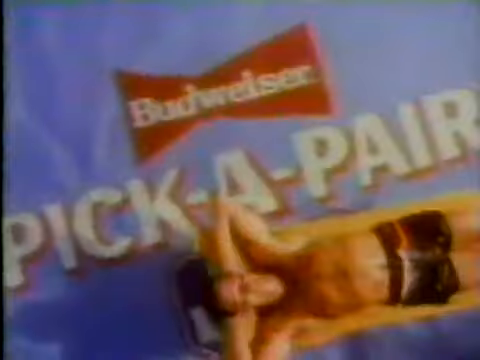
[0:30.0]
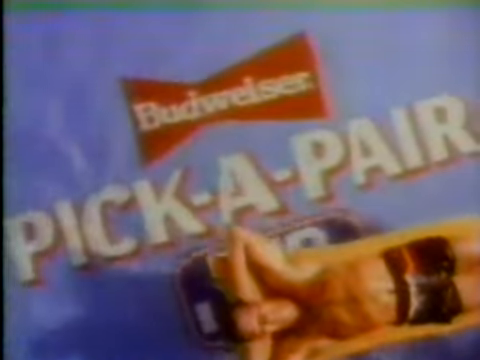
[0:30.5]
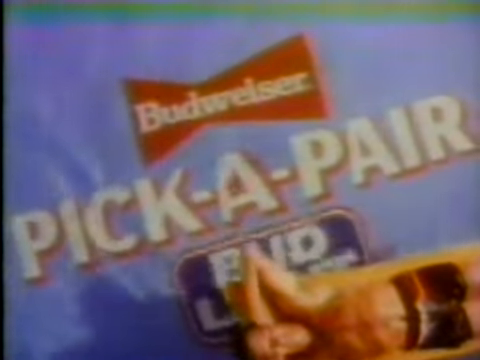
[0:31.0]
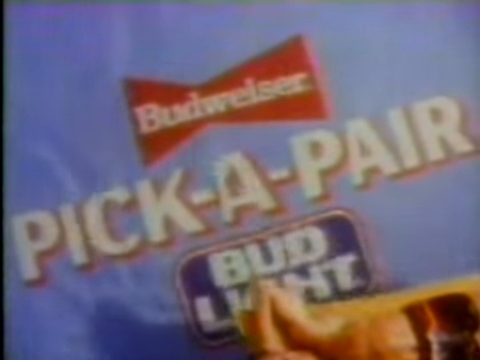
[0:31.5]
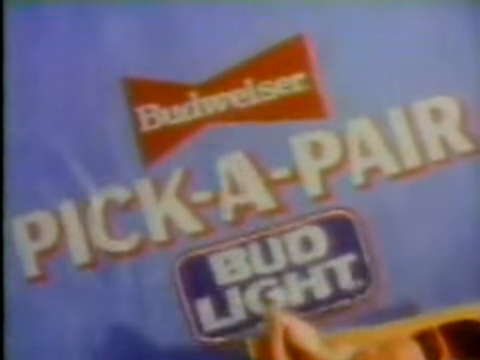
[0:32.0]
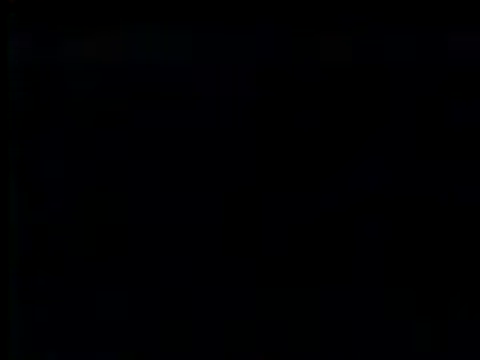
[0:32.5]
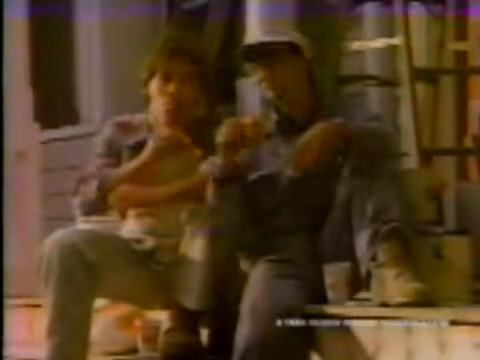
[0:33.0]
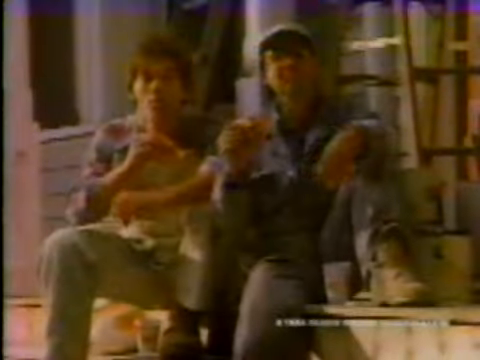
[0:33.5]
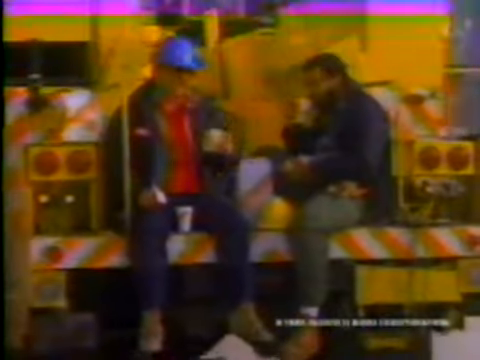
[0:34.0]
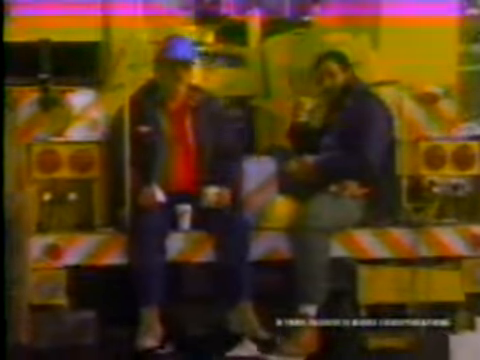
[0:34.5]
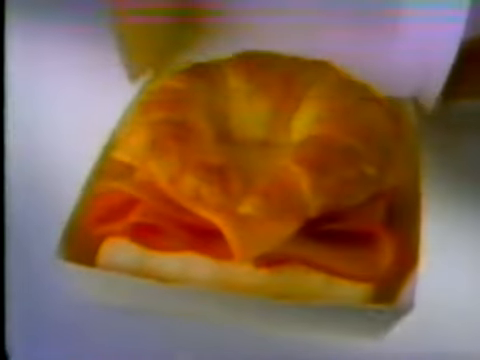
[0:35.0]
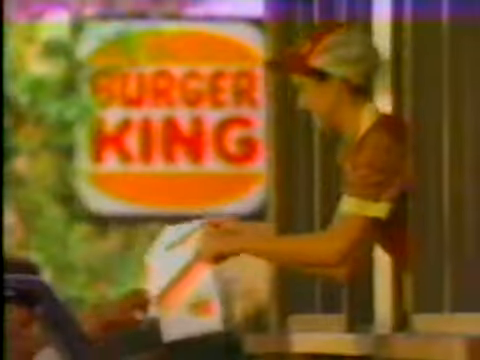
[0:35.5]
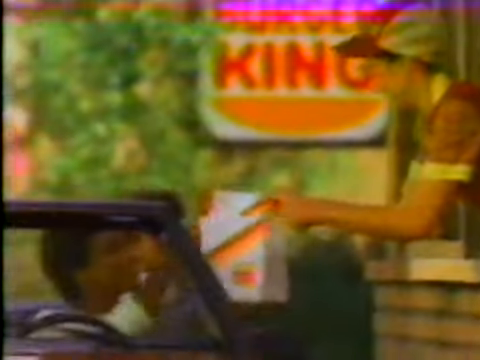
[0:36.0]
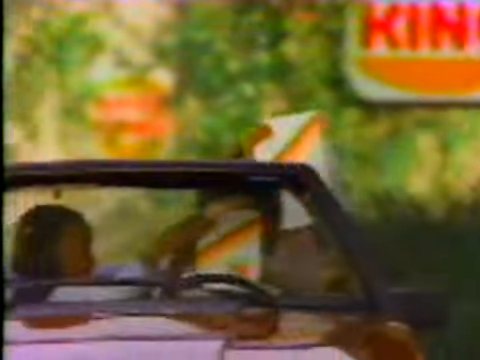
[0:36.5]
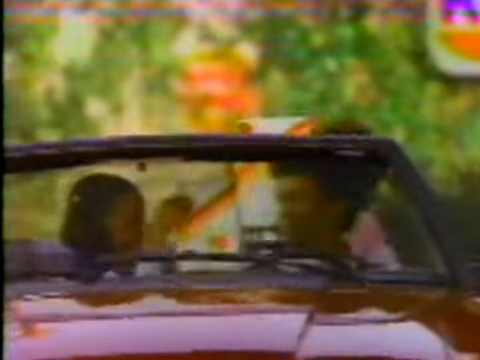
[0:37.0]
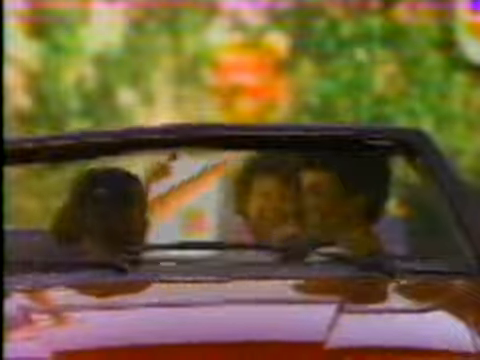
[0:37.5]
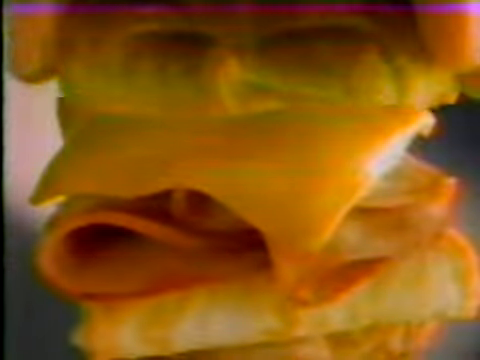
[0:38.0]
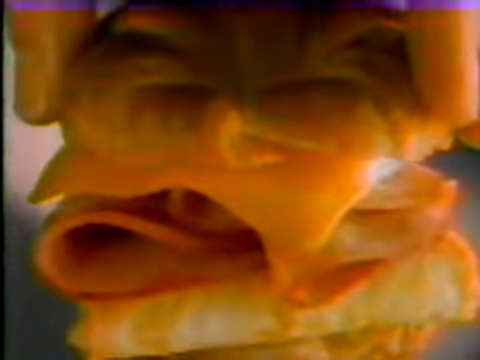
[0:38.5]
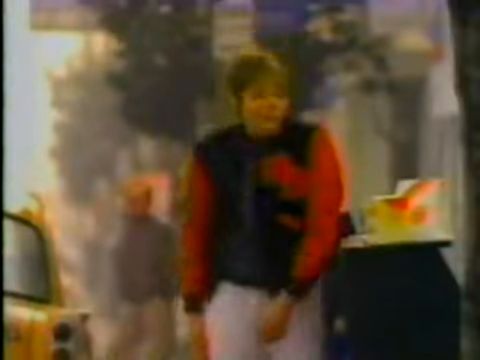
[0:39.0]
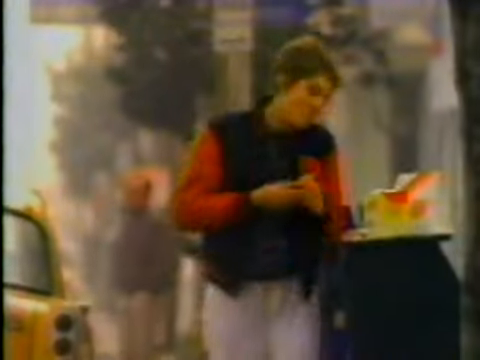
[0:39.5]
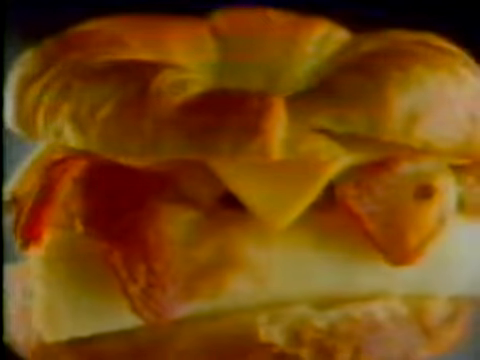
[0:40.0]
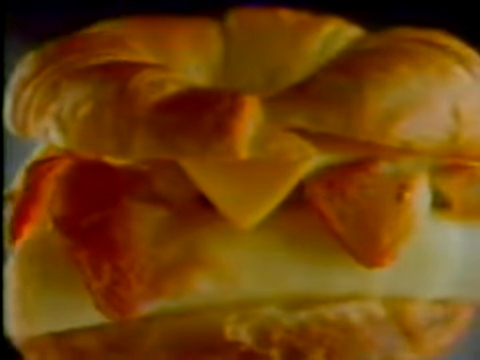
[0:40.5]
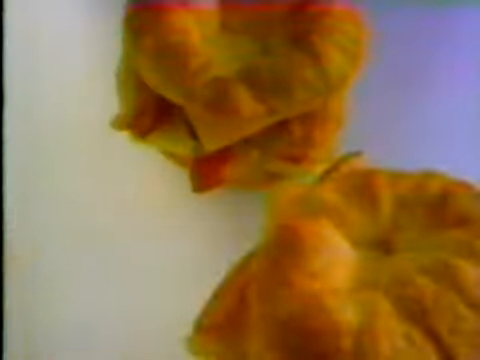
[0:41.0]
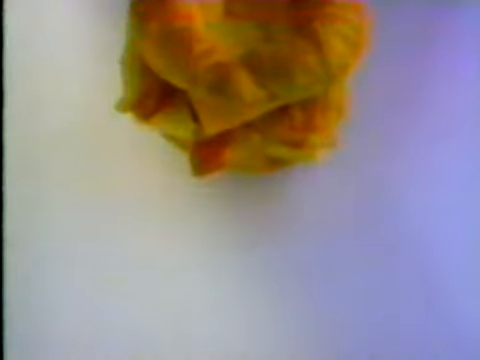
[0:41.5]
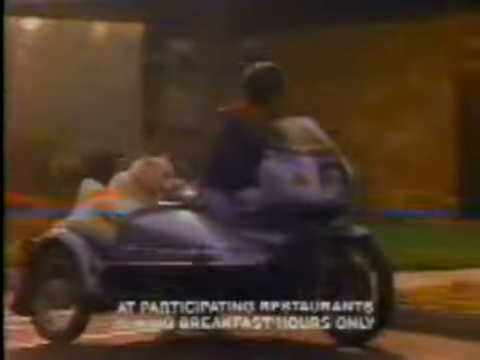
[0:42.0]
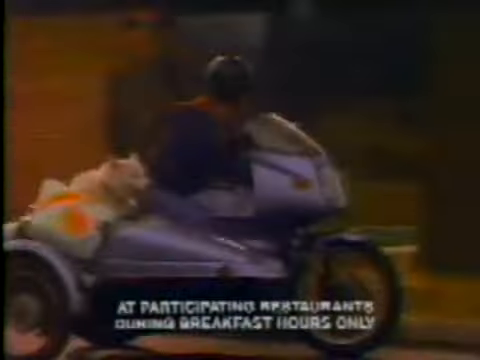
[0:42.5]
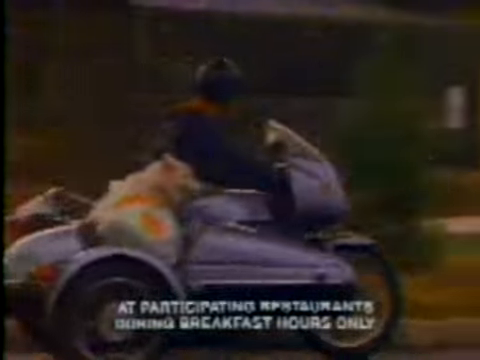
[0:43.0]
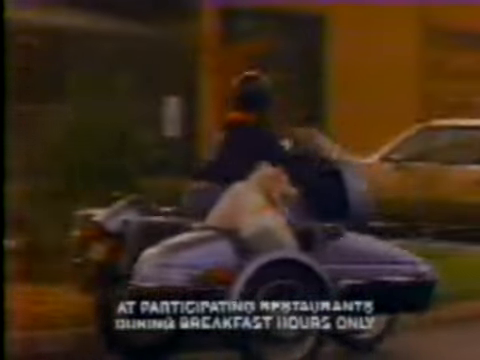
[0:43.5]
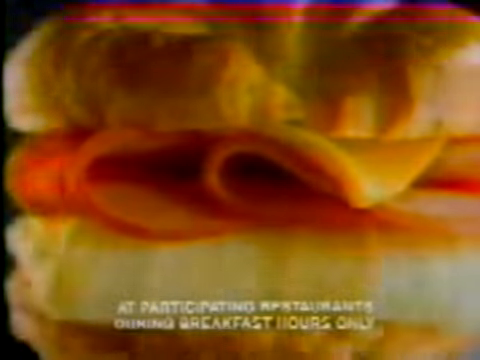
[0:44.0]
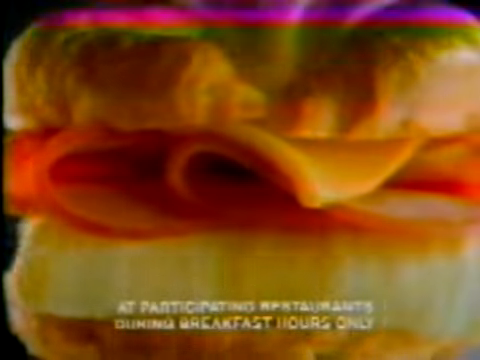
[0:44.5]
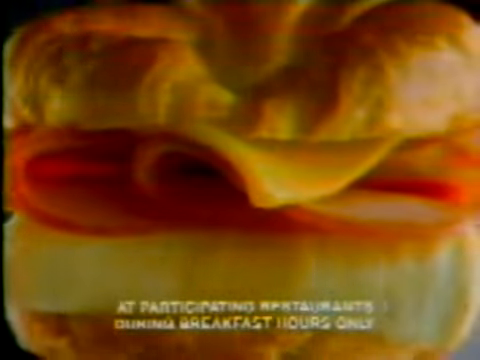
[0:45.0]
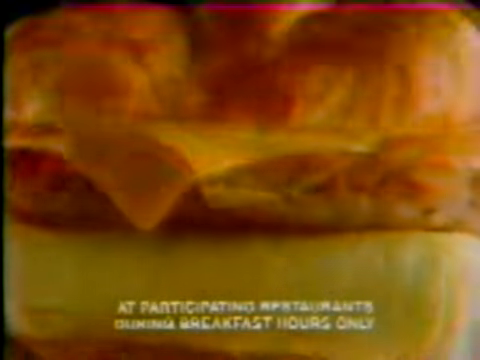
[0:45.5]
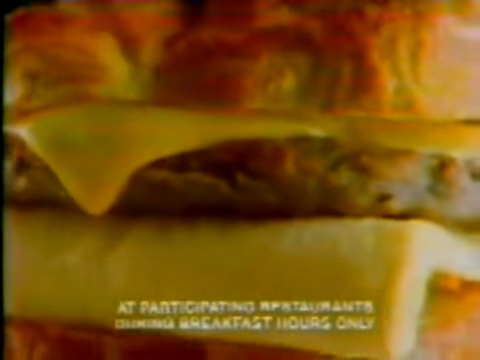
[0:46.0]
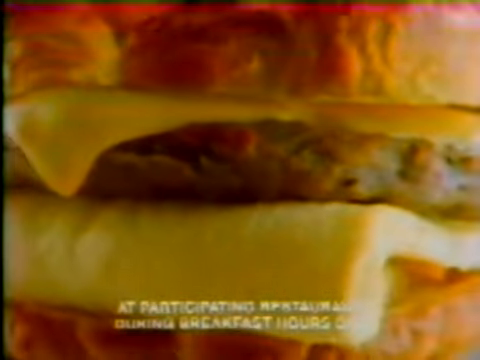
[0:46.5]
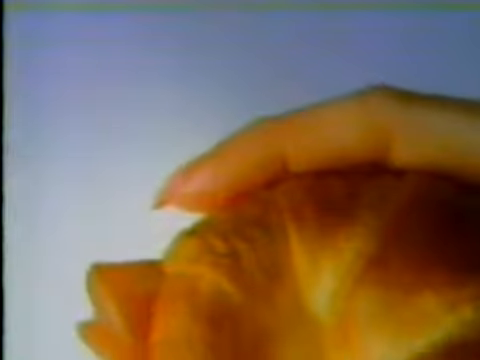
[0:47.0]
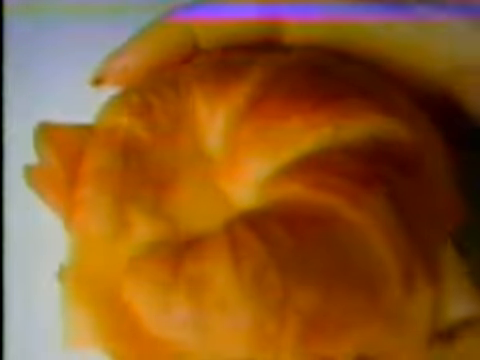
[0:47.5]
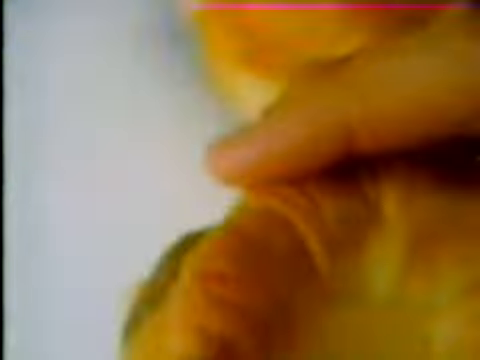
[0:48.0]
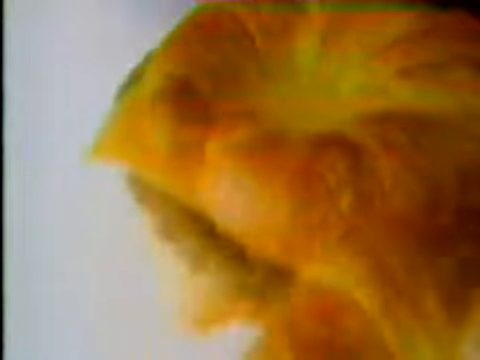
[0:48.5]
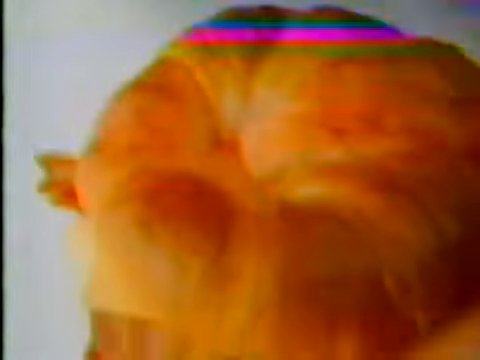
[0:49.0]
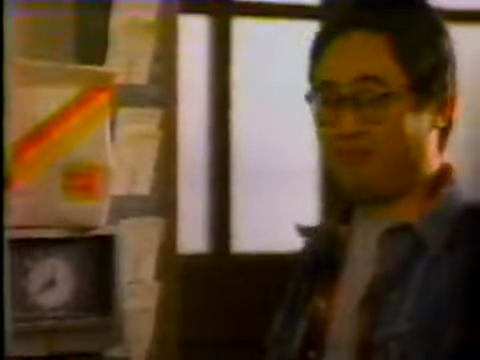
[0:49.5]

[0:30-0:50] The background is blue. A person buys fast food, apparently bagels, and a lady dances. The bagel appears to have two slices of cheese, a bun on top and at the bottom, and a patty inside. It looks small. People doing different kinds of jobs, including factory workers, are shown buying it and seem to be enjoying it.